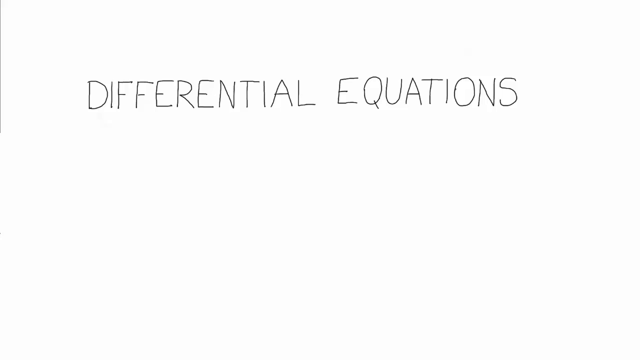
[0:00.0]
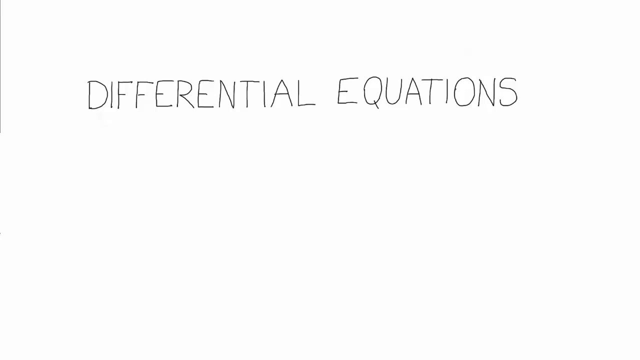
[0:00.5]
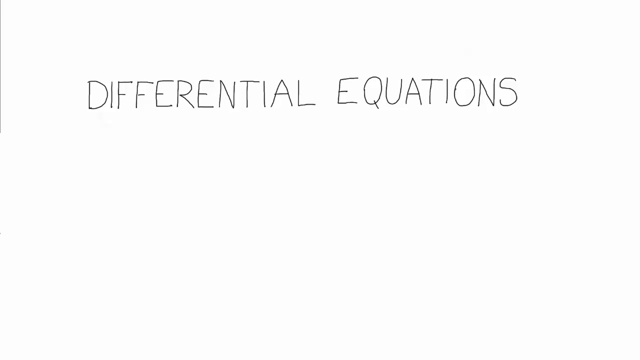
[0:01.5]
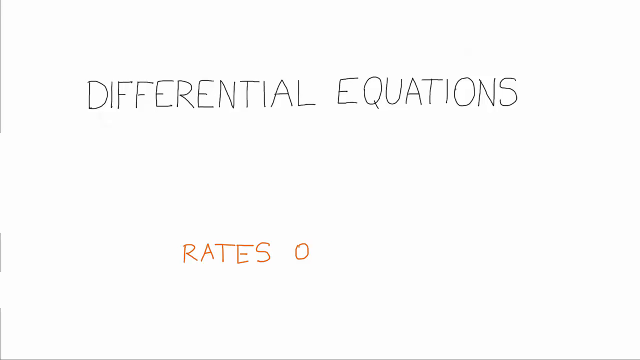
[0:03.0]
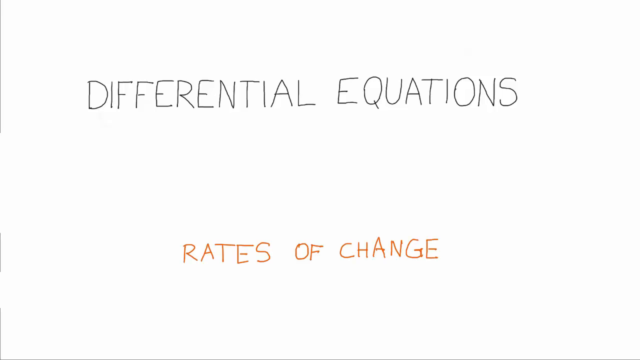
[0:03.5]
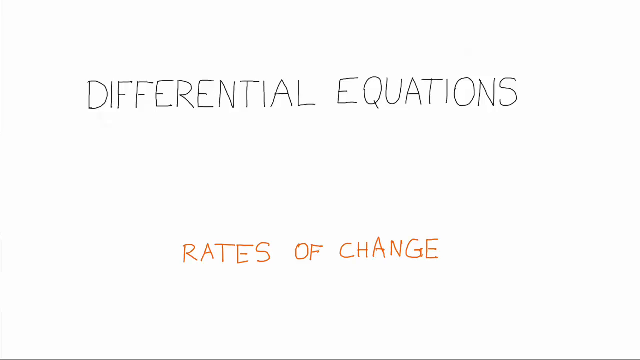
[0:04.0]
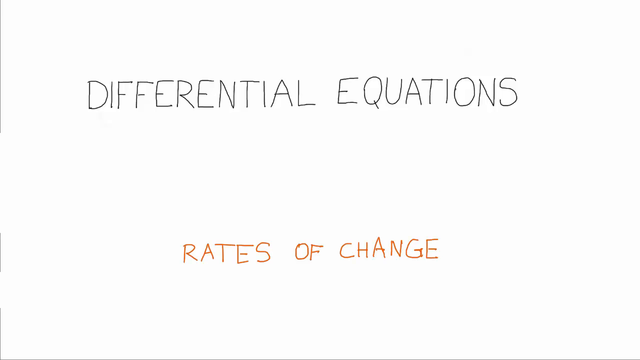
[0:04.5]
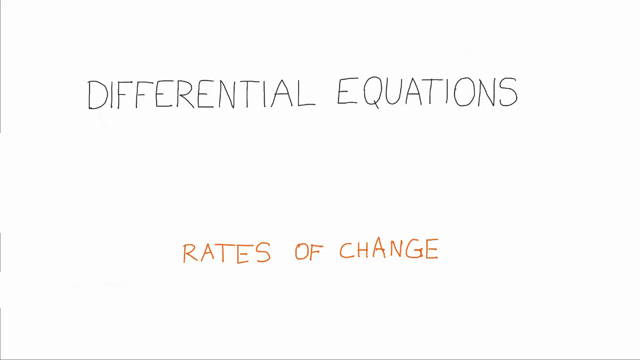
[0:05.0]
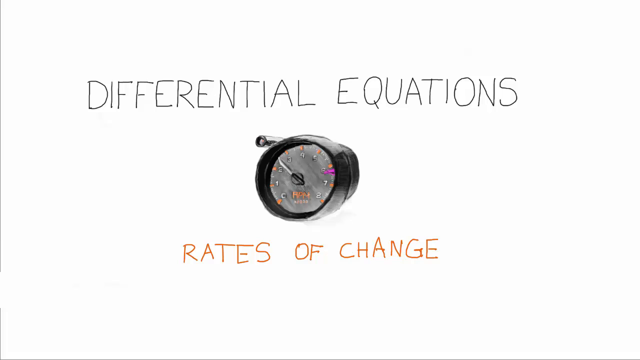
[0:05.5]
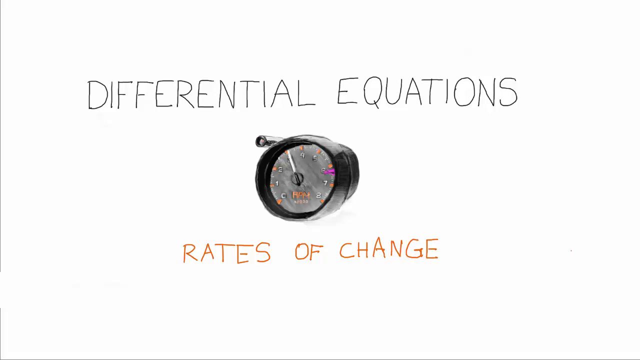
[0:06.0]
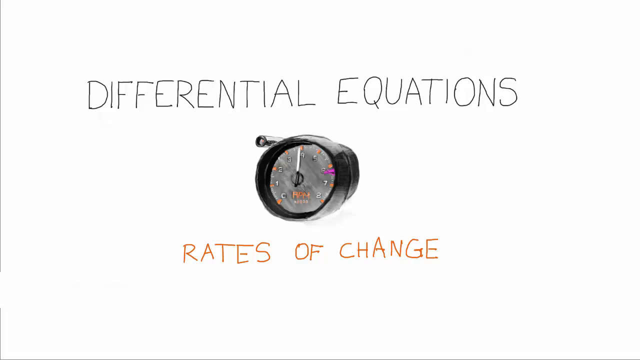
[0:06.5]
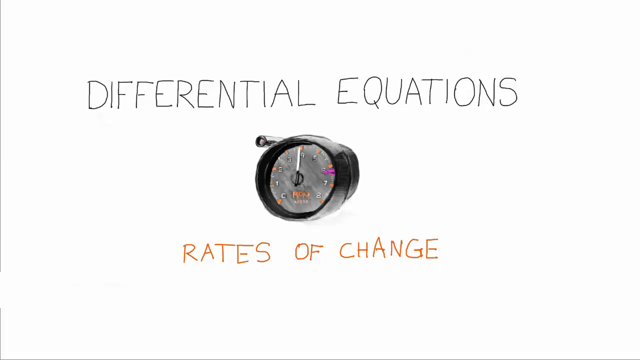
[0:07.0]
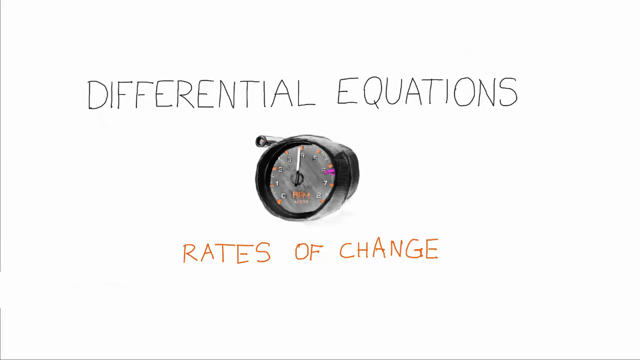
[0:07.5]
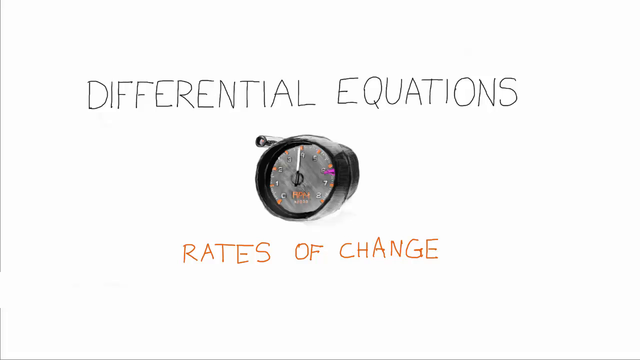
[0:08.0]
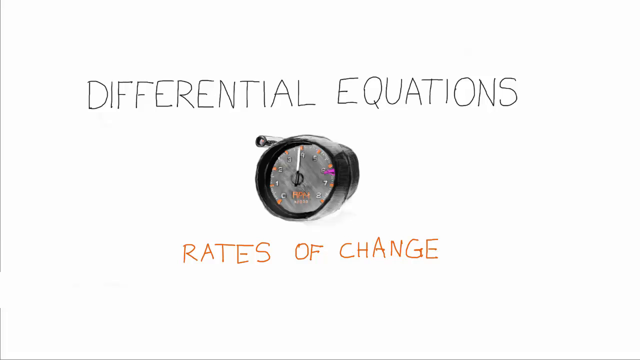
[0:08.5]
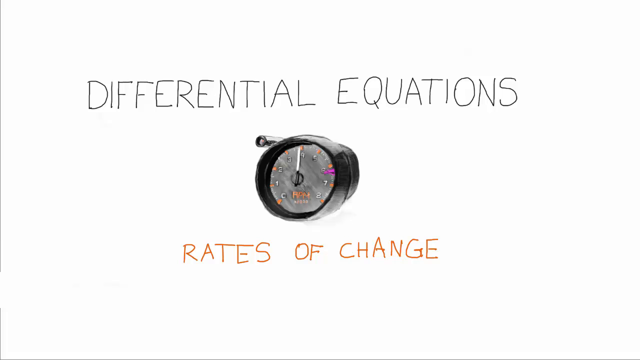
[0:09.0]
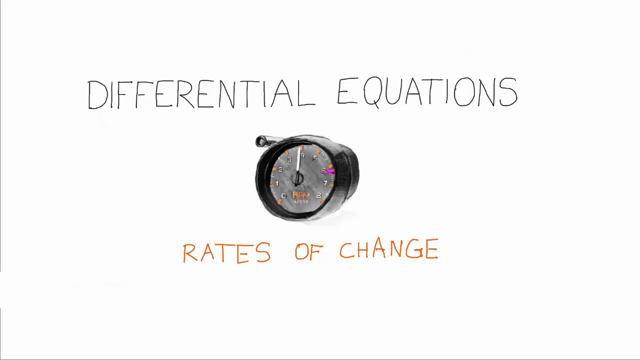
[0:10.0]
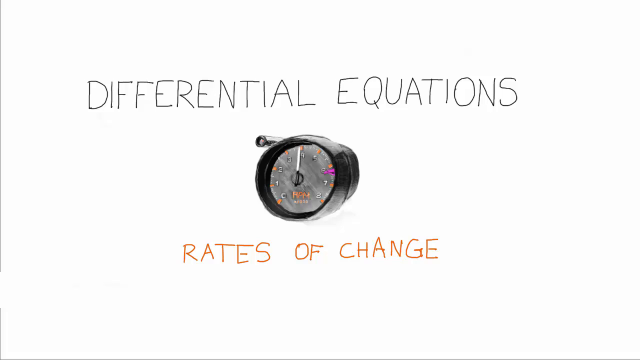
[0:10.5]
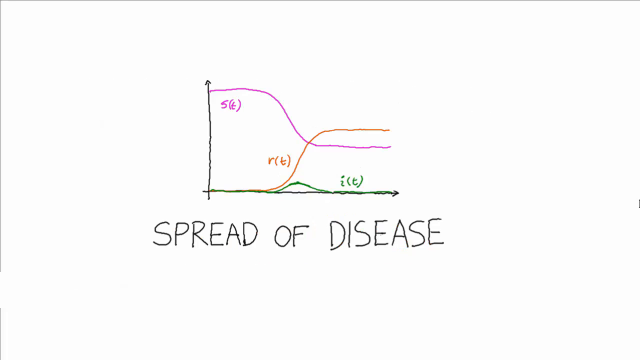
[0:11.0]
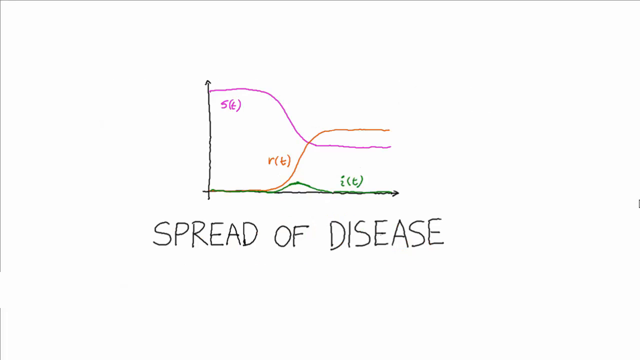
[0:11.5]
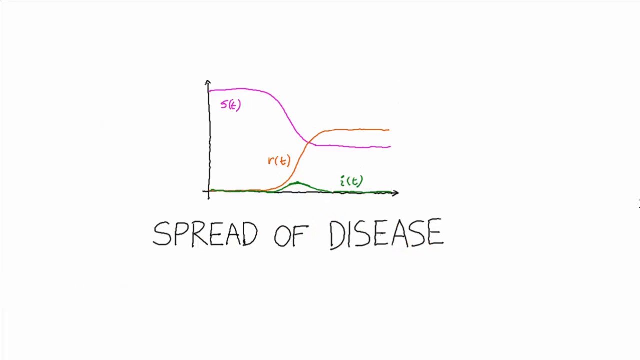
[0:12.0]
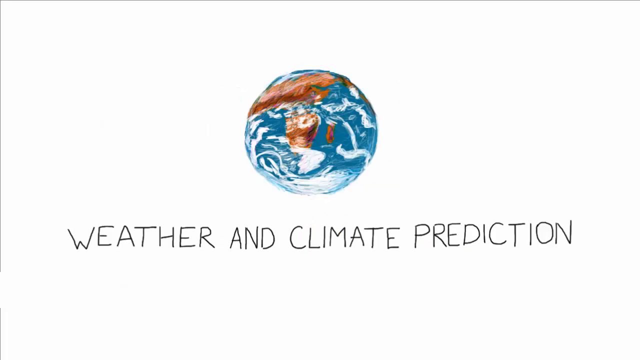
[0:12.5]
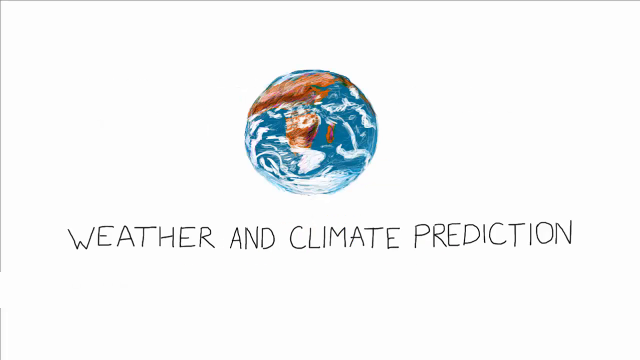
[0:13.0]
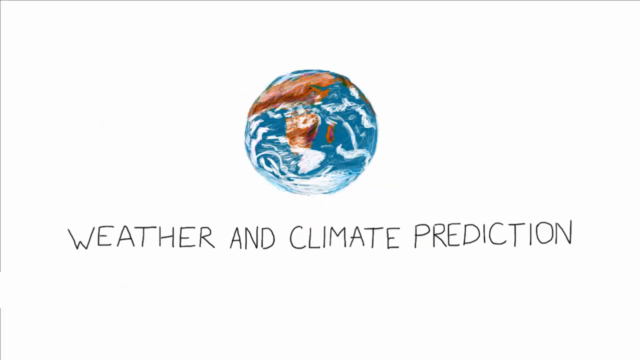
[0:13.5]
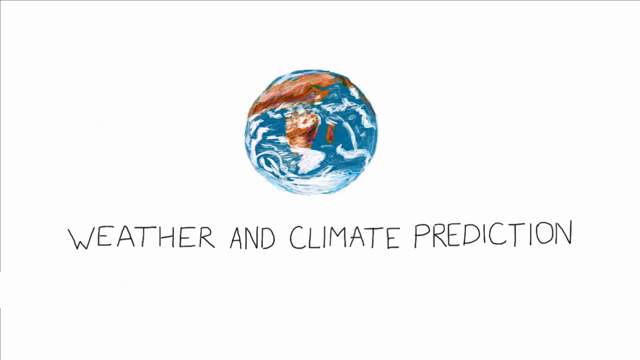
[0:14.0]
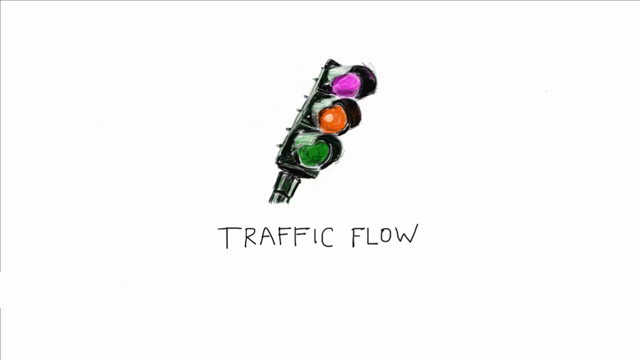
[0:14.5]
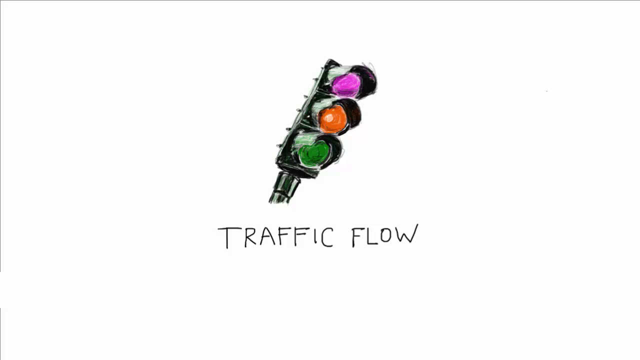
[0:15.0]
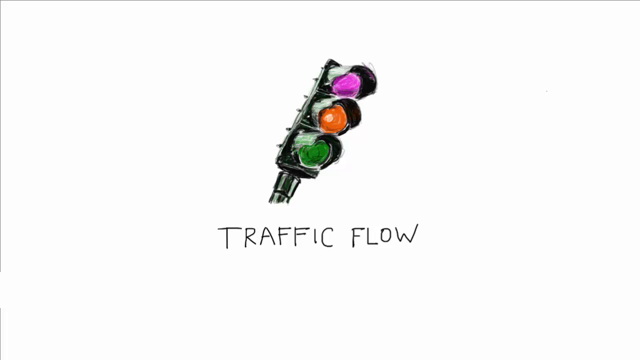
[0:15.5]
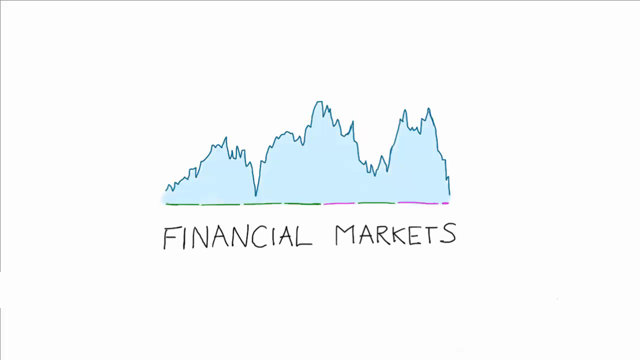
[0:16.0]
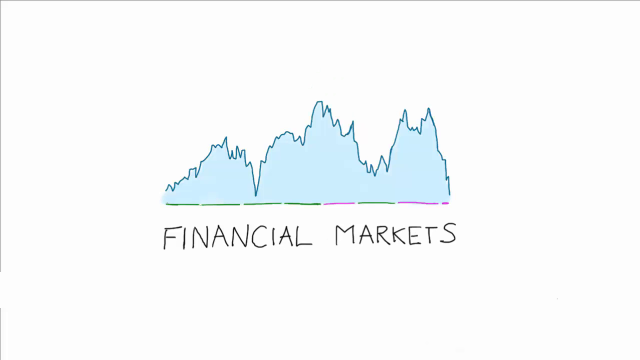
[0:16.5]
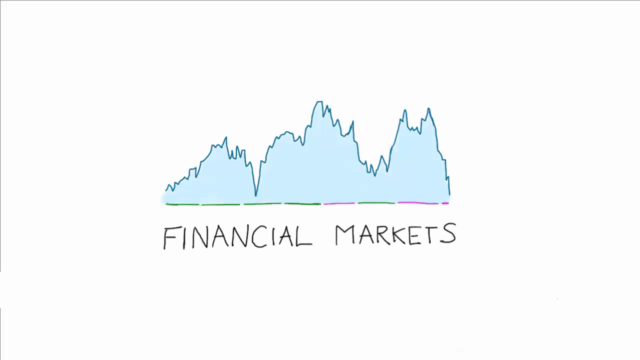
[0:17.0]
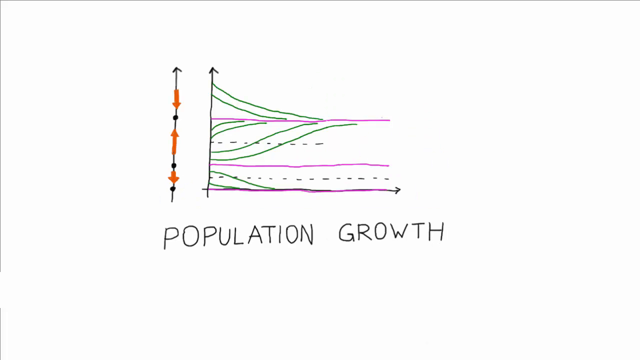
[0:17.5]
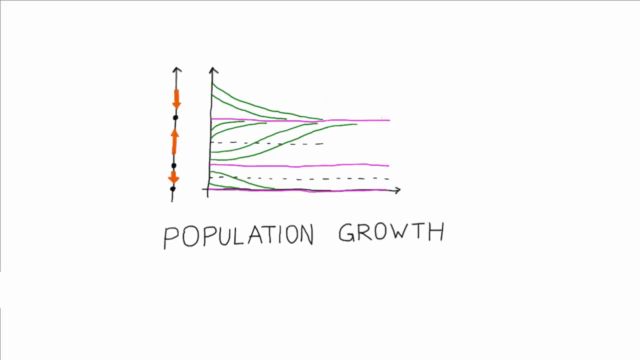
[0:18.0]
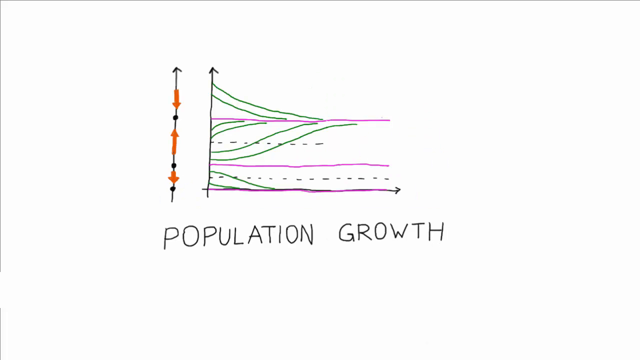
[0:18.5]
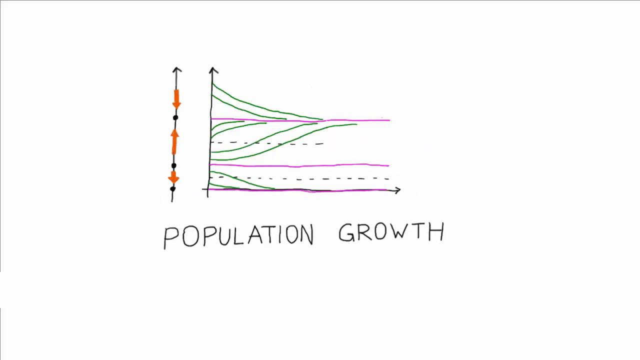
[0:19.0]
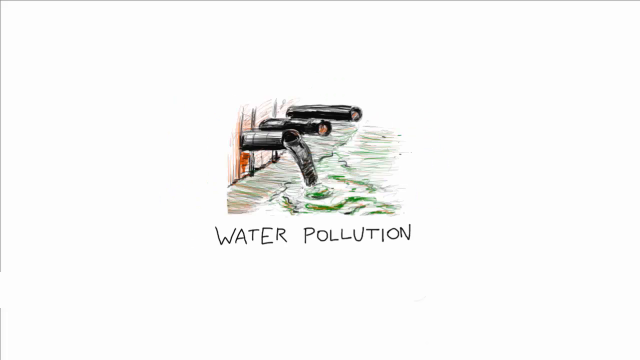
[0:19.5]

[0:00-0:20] The video starts with a white background. Just down from the top, centered, "differential equations" appears in all-capital black lettering. Then, across the bottom in red, slightly smaller and also centered, "rates of change" is written in all capitals. An odometer appears in the center, with numbers going all the way around to seven, and there is something below it. "RPM" is in the center. The hand points up between the two and the three. It has a black casing and a black inside, with orange main lines and small white lines. The hand revs up to about the six and then drops down to the four. Next, a little up from the bottom and centered, "spread of disease" appears in black lettering. Above it is an arrow going up and an arrow going across. From the top of the upward arrow, a purple line goes about halfway over, then goes down to the right, and then straight across at about the midway point. A red line comes up from the bottom at about the midway point and arches up to the left, just above the purple one. A green line has a little hump in the middle where the purple one begins. Labels appear: one in purple with a T in parentheses, an R with a T in parentheses for the red line, and an I with a T in parentheses. Next, a globe appears in the center, blue with brown land and white for the clouds, with "weather and climate prediction" written in black across the bottom. Then a stoplight appears with its top leaning to the right. Only the part with the colors and a little of the pole is shown. The top light is purple, then red, then green, and "traffic flow" is written underneath it in black lettering. Next comes "financial markets" with a light blue line squiggling up and down across it like a graph. Then "population growth" appears, with lines going across left or right, an arrow on the outside, and three red arrows: one pointing down, one pointing up, and the last pointing down. Purple and green lines run across the population growth graph. Then "water pollution" appears.